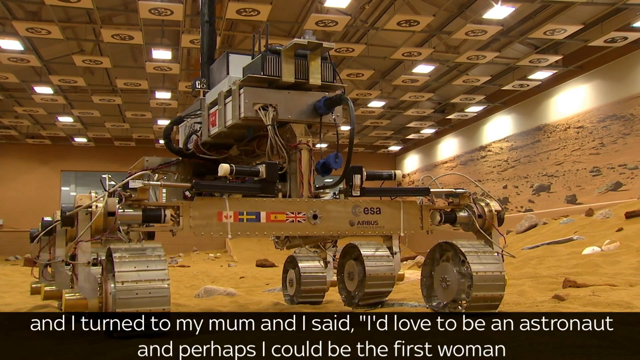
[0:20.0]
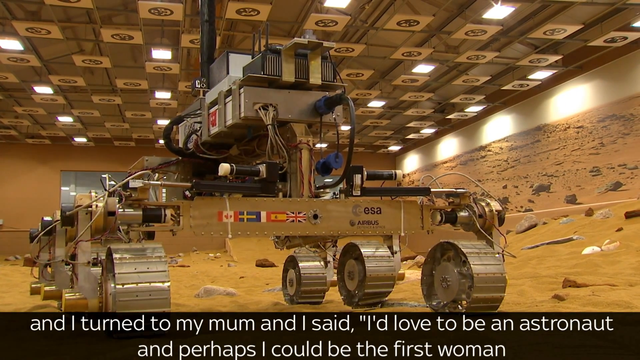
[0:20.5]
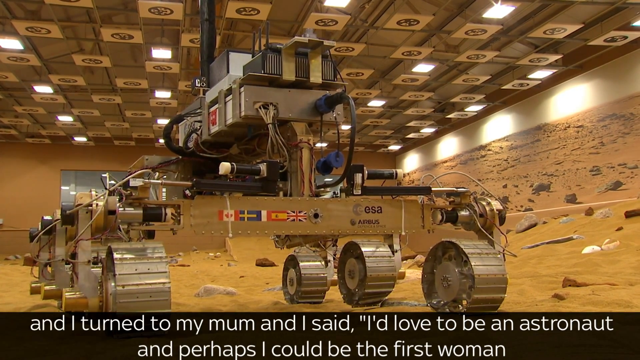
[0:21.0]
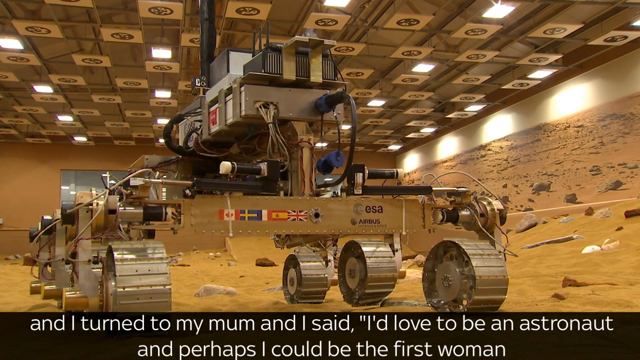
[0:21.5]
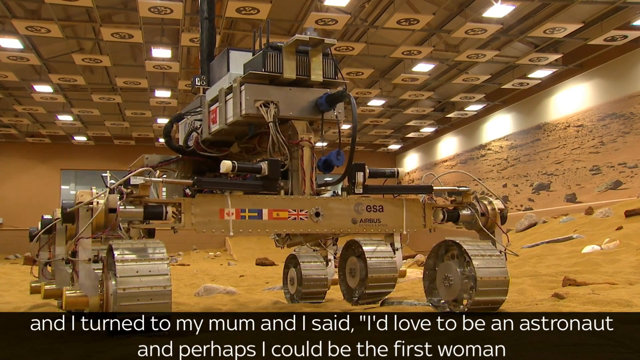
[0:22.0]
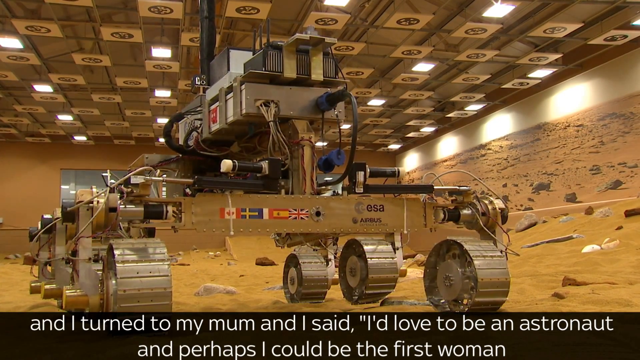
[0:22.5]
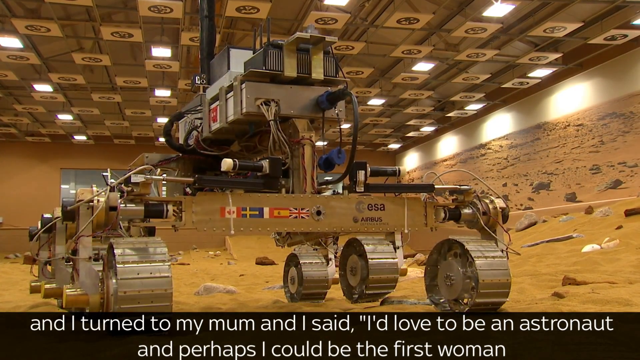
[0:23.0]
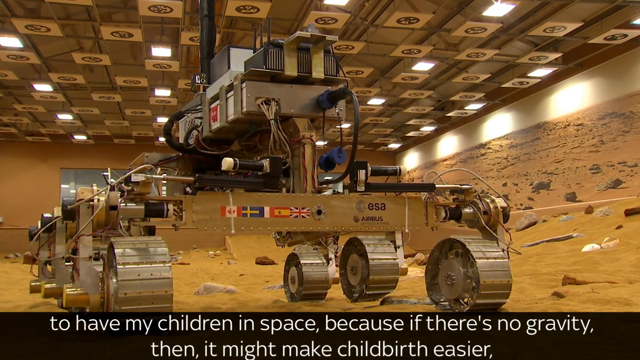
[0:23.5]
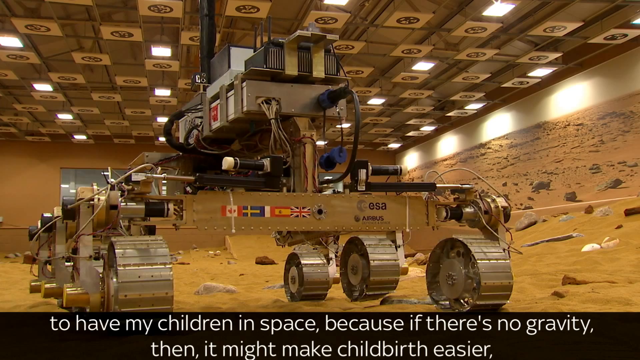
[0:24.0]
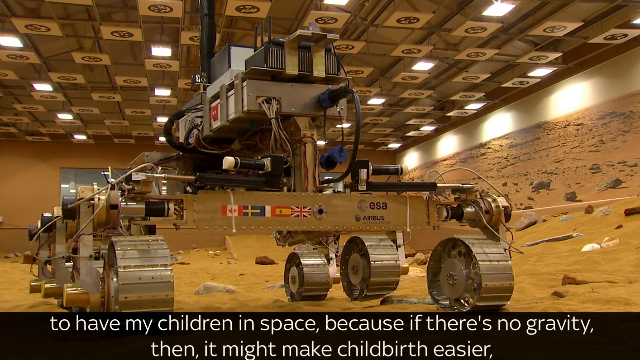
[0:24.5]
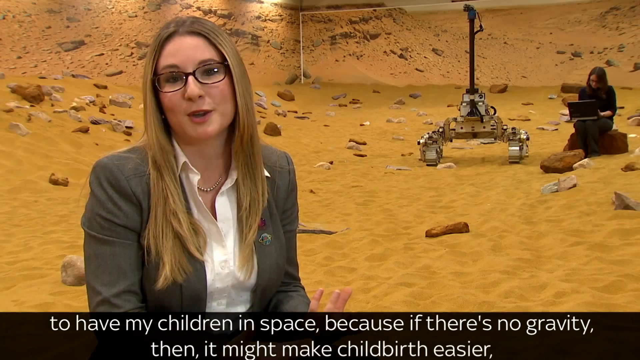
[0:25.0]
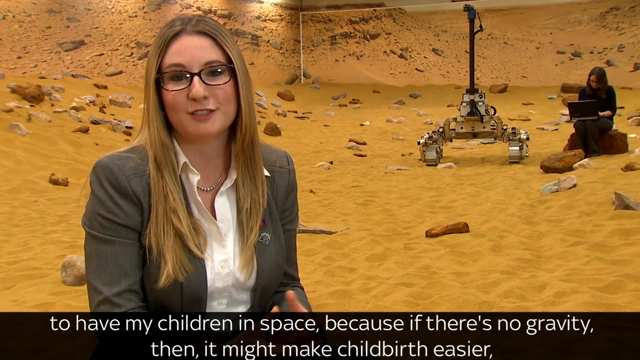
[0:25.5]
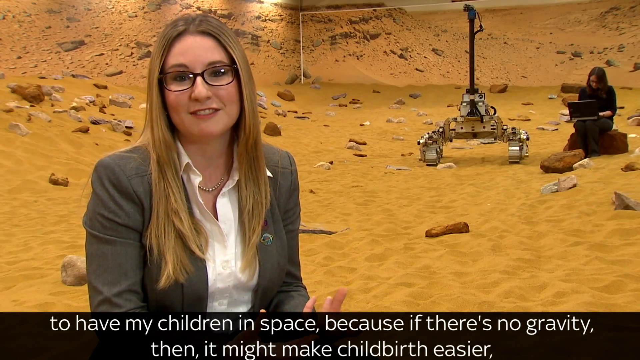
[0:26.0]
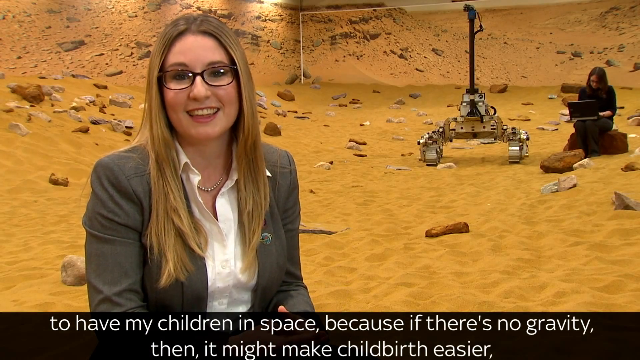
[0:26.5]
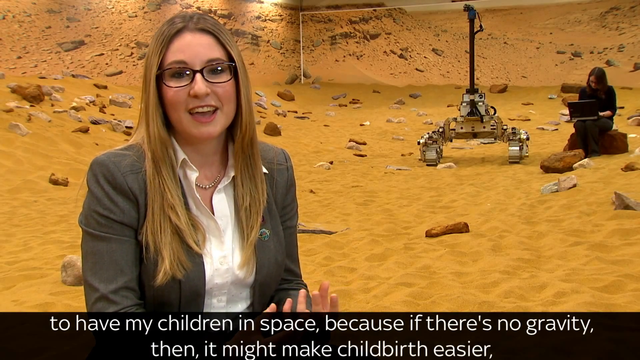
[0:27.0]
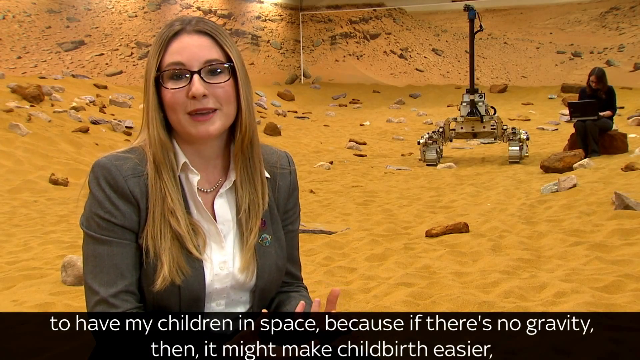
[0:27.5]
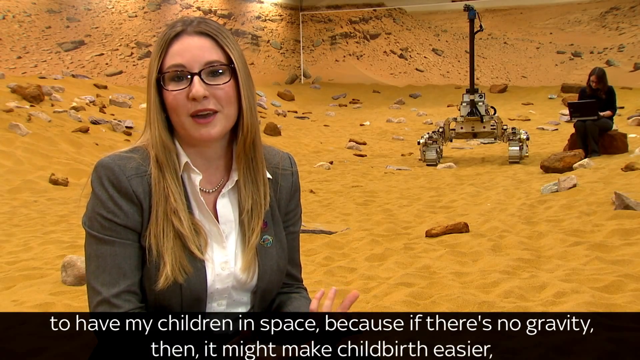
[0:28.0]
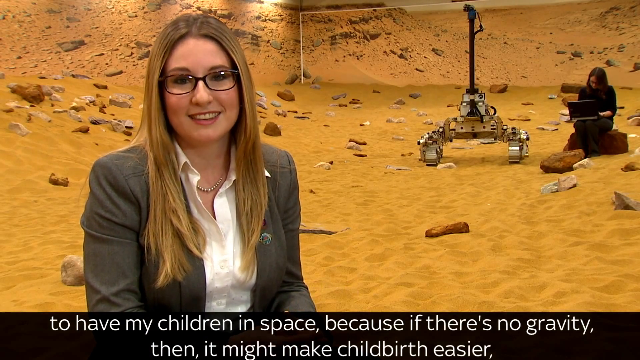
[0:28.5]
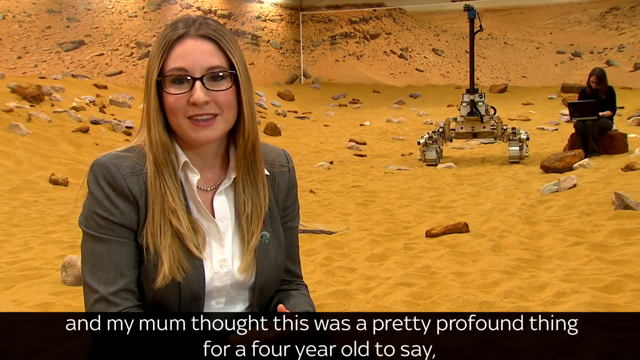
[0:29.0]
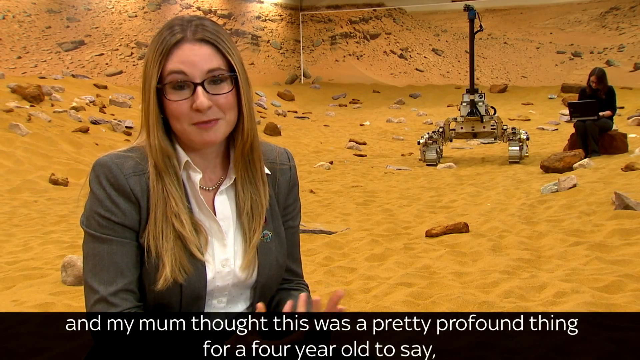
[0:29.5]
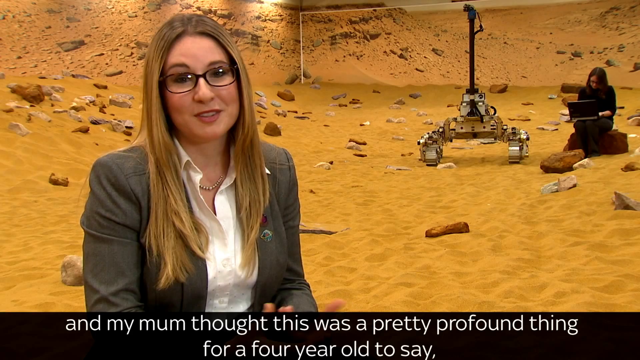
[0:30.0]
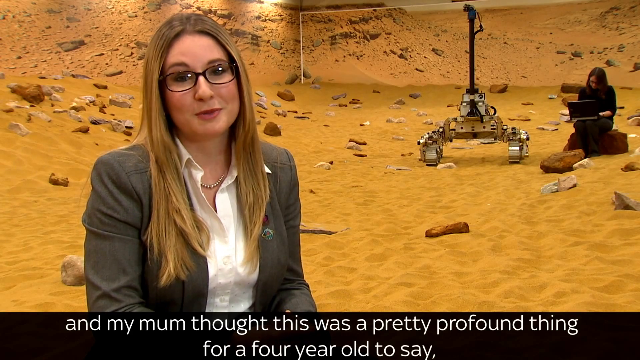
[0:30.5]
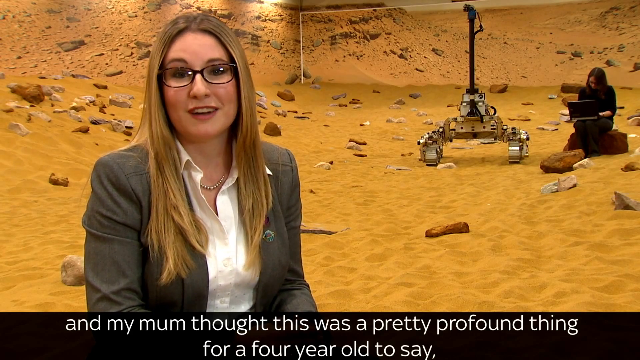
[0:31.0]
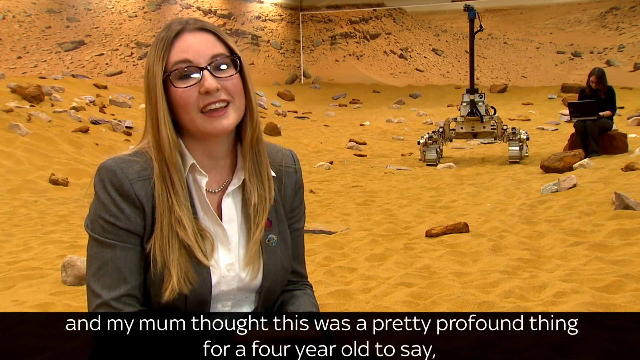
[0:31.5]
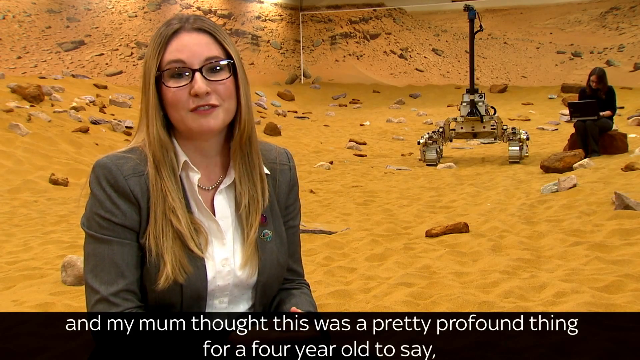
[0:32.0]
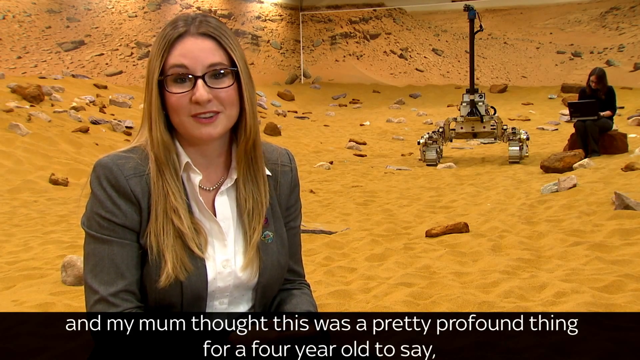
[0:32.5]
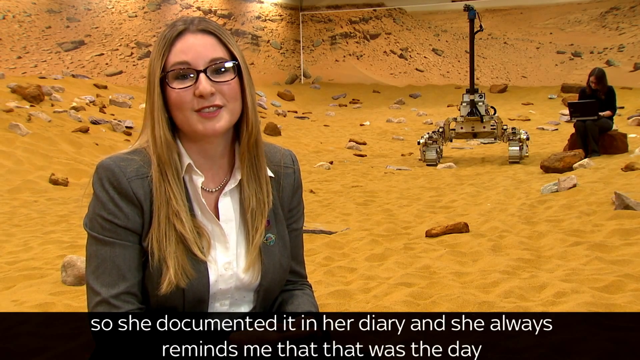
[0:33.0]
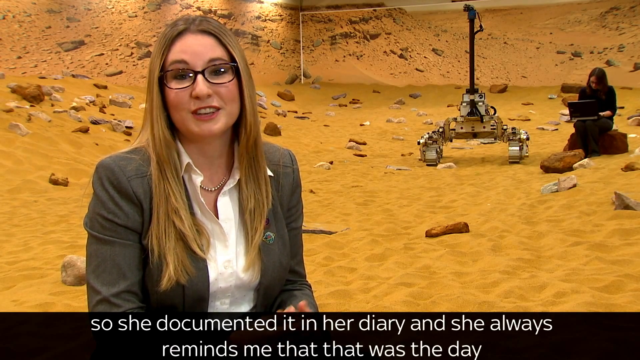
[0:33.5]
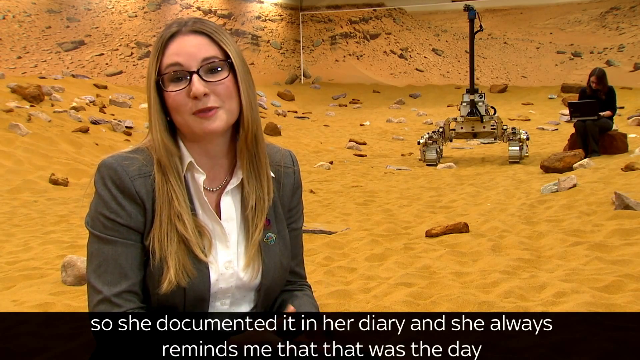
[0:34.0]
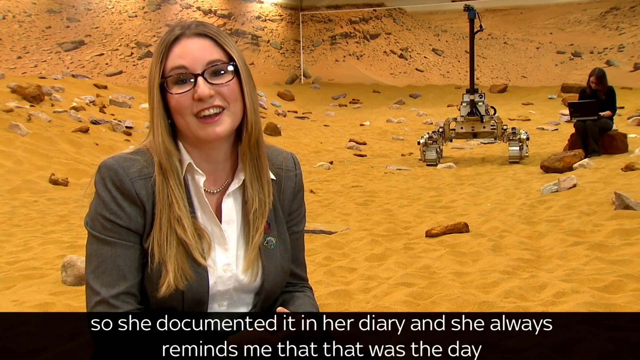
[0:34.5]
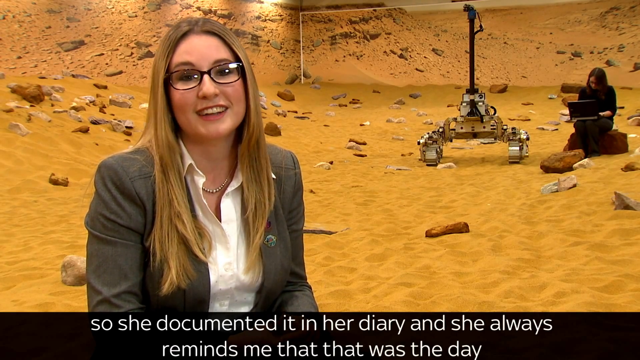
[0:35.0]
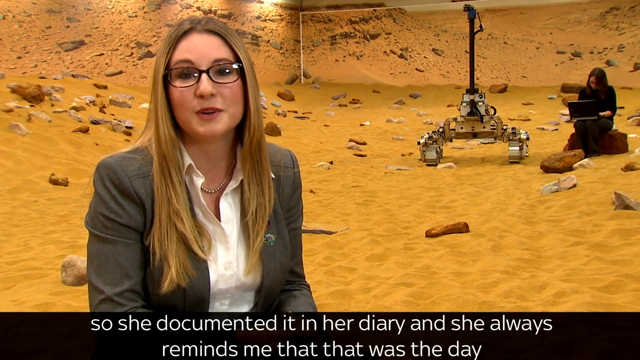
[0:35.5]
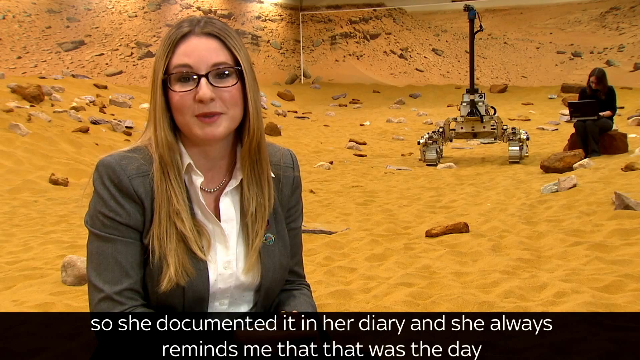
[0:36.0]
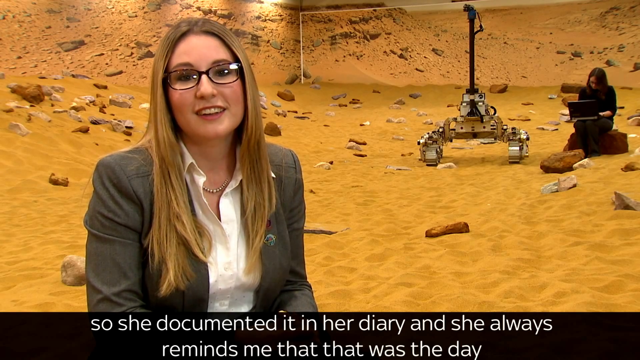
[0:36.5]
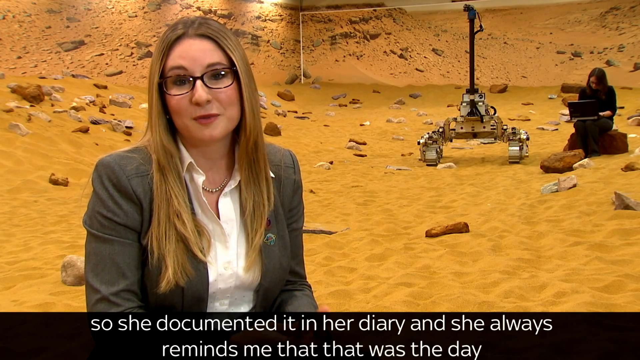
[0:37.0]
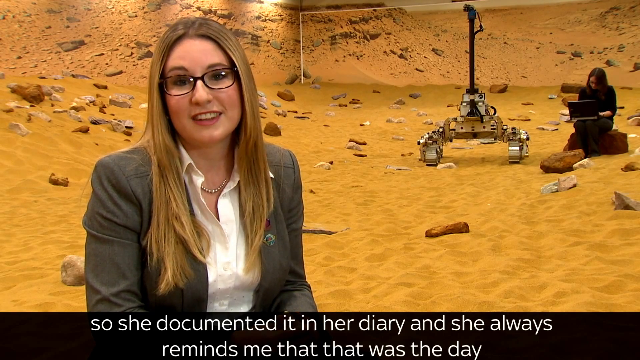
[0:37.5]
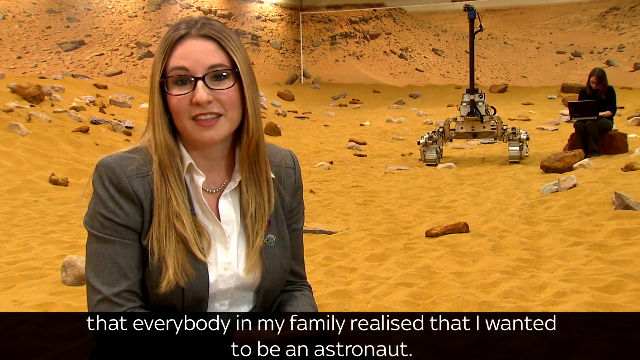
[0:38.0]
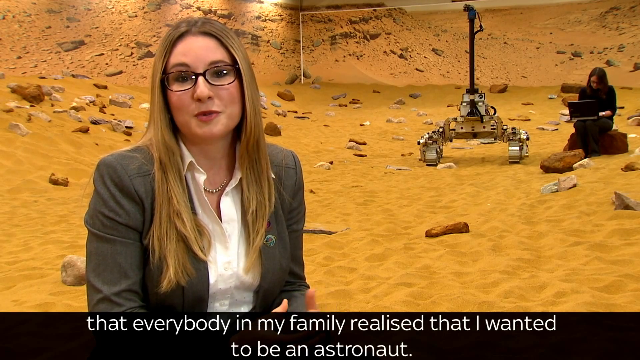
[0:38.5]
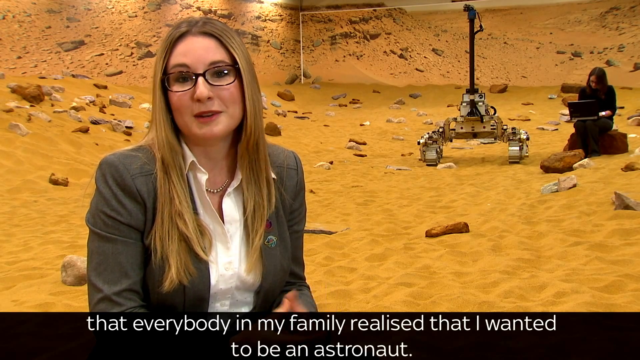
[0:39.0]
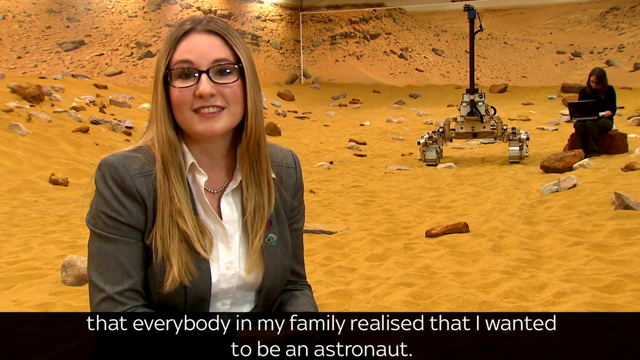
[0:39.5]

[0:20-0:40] The camera looks directly at the huge metal device in the background that goes all the way up to the ceiling. It is almost like two levels and is made of some kind of metal, with wires coming out the front of the second level going to the first level. Most of it is a silver metallic color, but a square portion up top is black, and what looks like a huge black tube comes out of it going up to the ceiling. The video then returns to the woman talking into the camera, her head slightly moving left to right and up and down. Her arms and hands seem to be lying on her lap out of the picture, but occasionally, as she speaks, her fingers come up slightly into view.